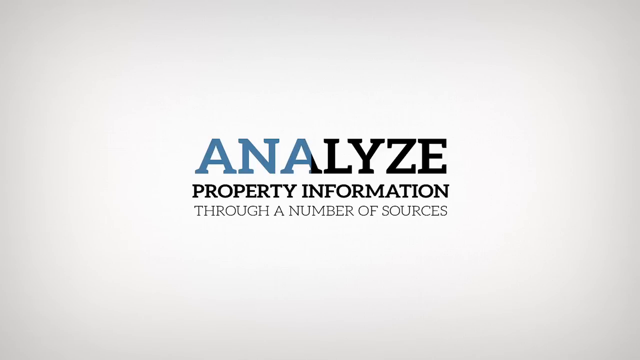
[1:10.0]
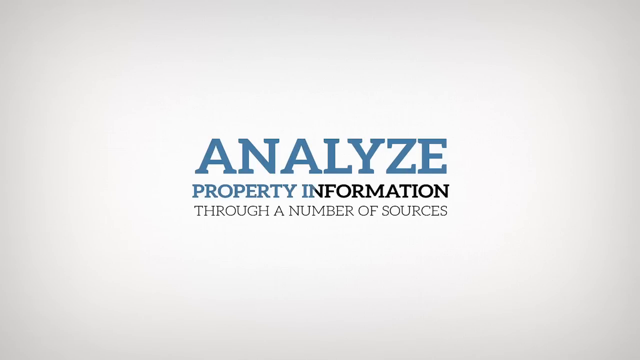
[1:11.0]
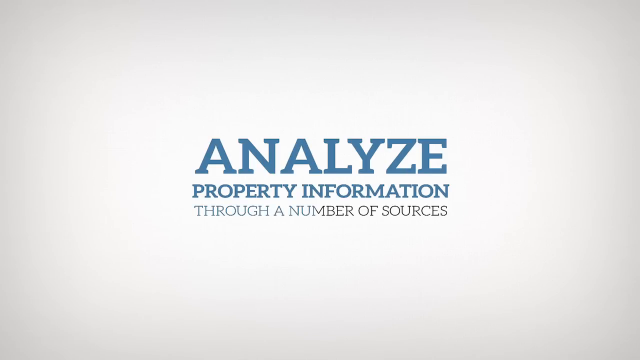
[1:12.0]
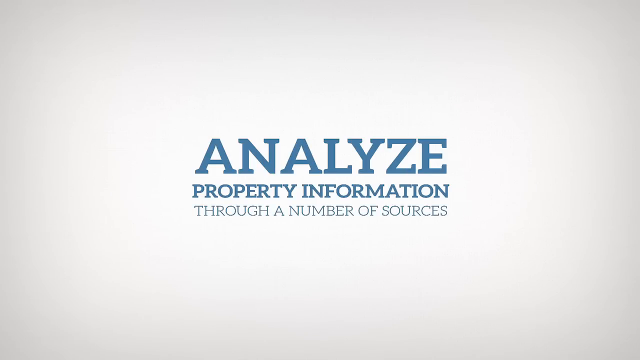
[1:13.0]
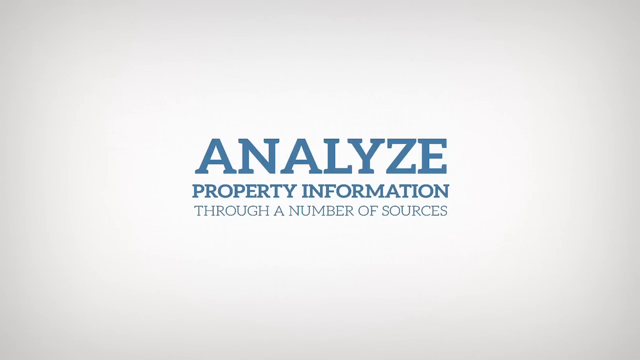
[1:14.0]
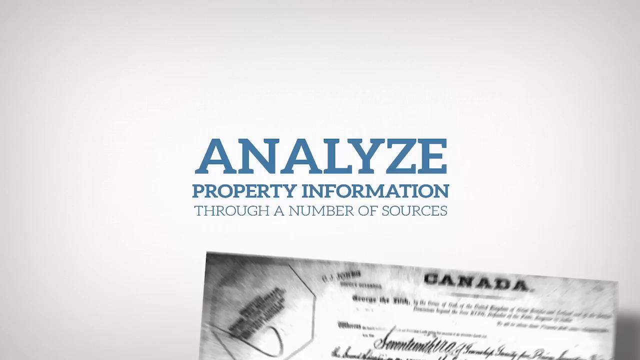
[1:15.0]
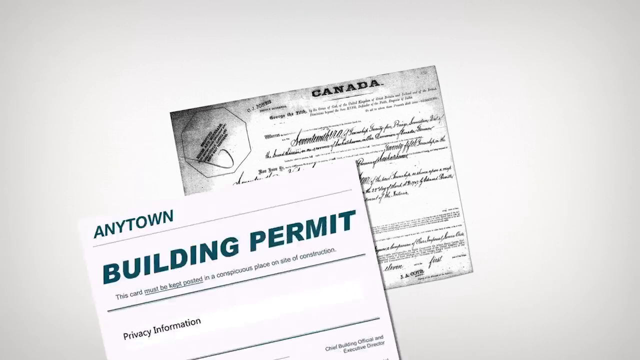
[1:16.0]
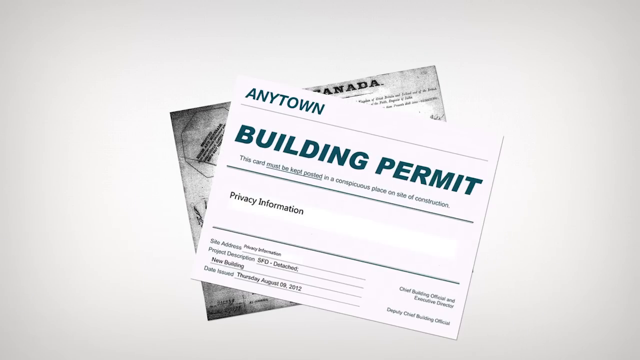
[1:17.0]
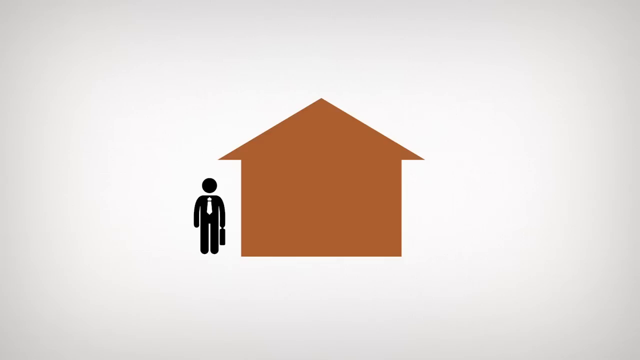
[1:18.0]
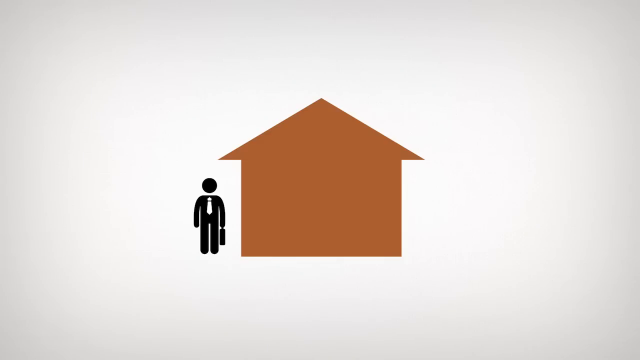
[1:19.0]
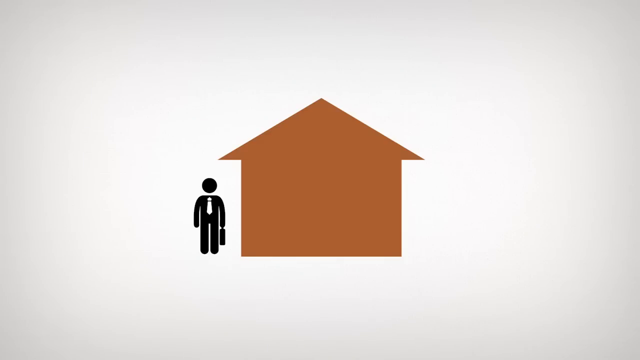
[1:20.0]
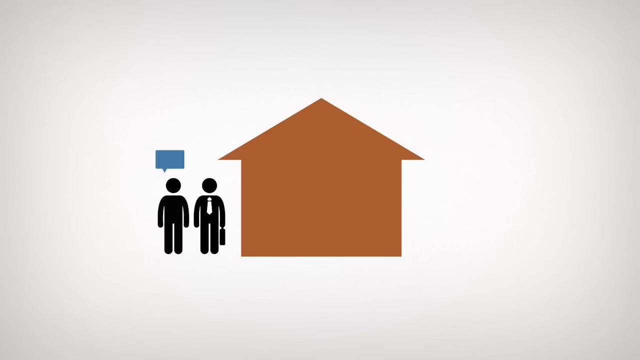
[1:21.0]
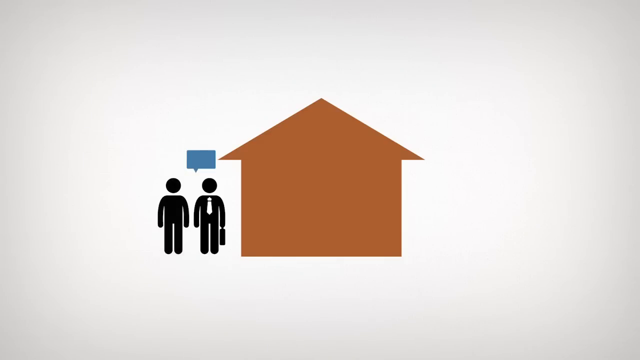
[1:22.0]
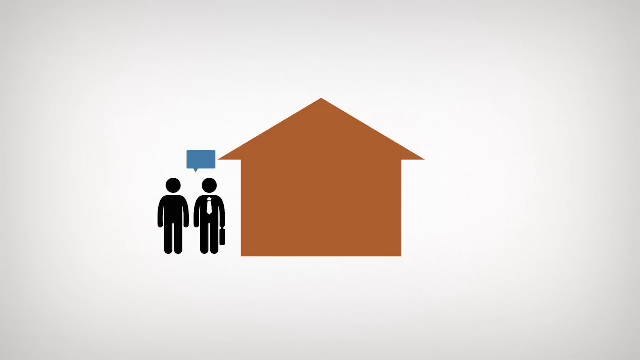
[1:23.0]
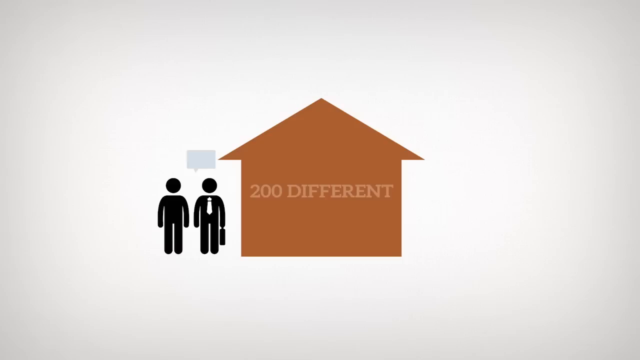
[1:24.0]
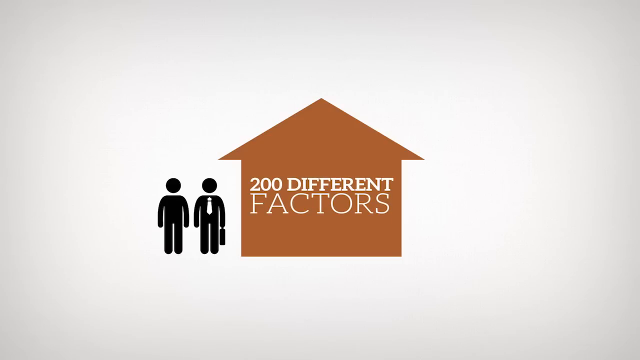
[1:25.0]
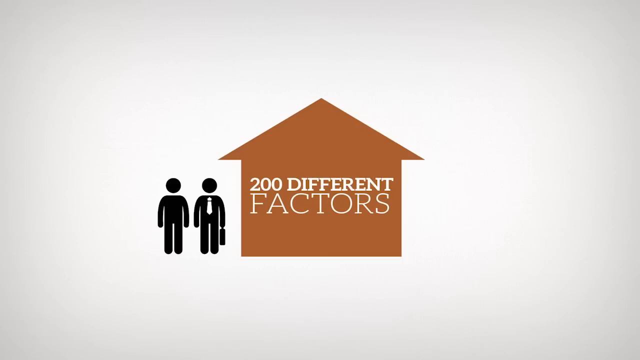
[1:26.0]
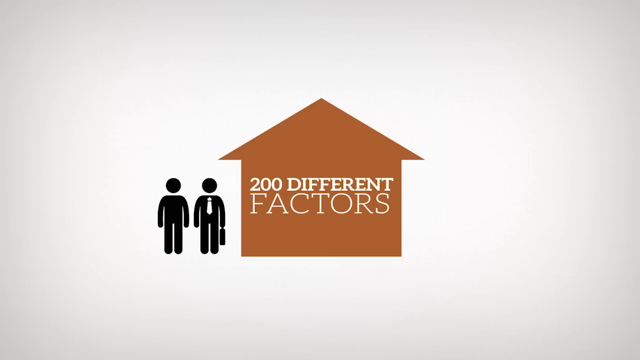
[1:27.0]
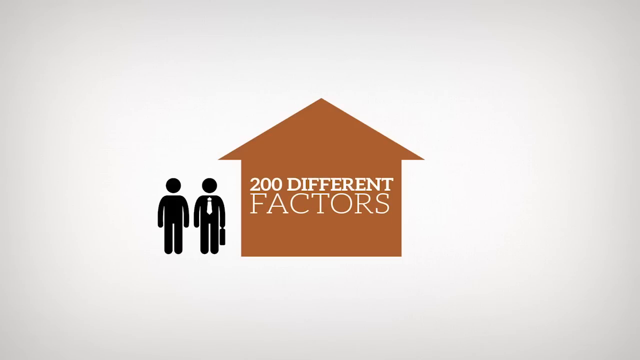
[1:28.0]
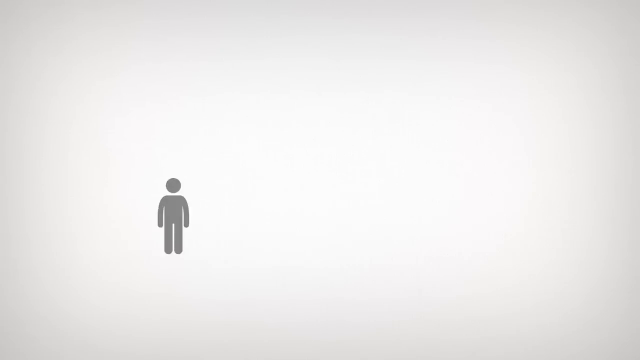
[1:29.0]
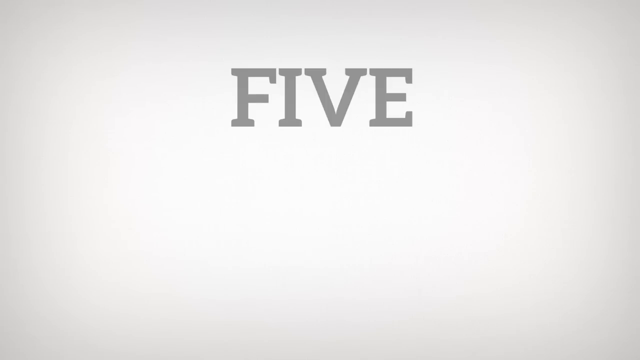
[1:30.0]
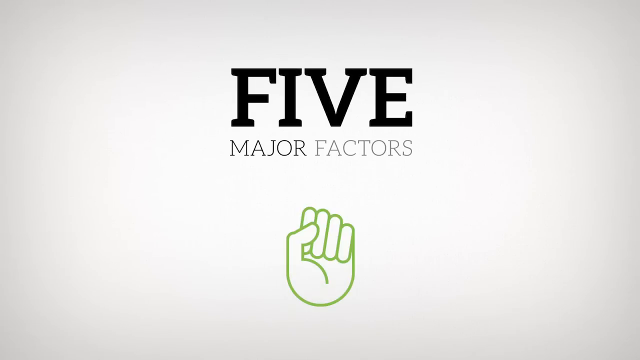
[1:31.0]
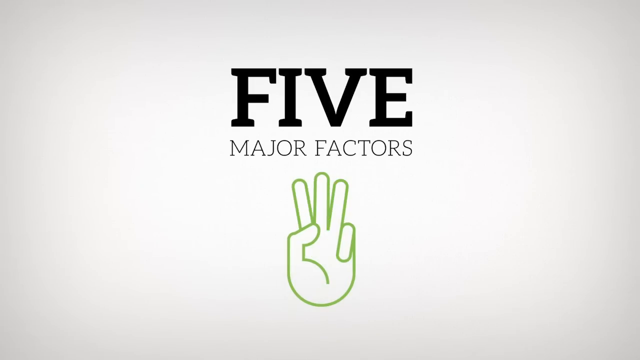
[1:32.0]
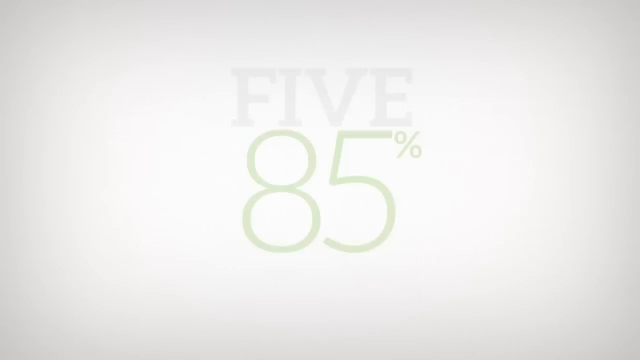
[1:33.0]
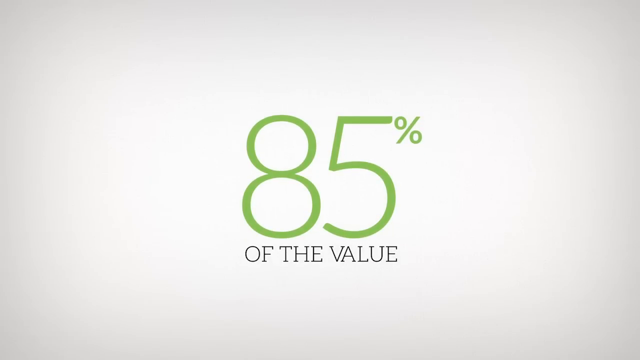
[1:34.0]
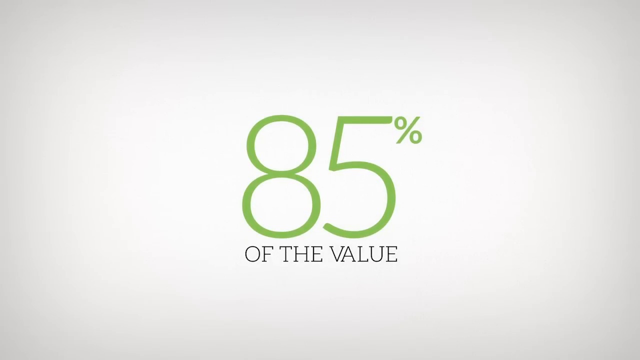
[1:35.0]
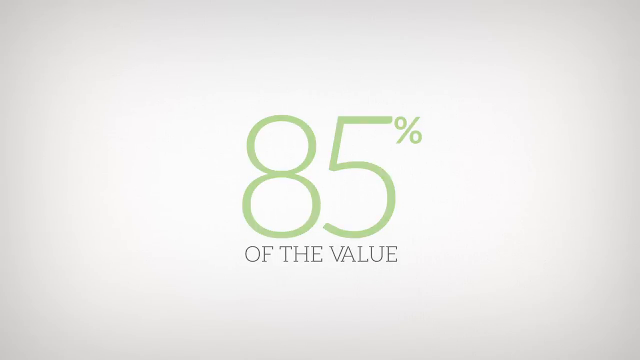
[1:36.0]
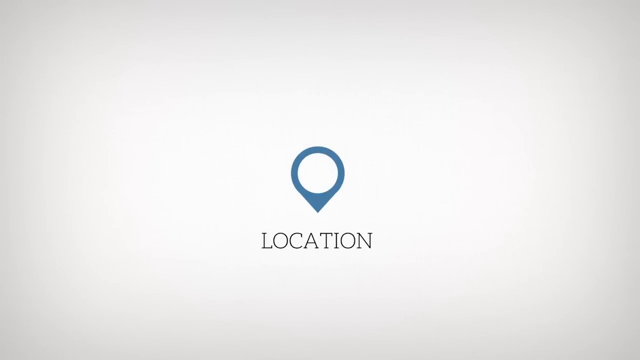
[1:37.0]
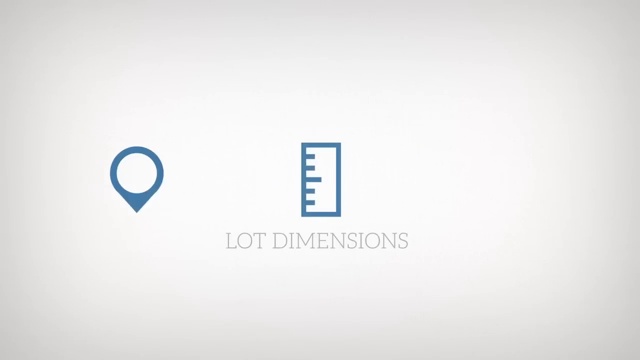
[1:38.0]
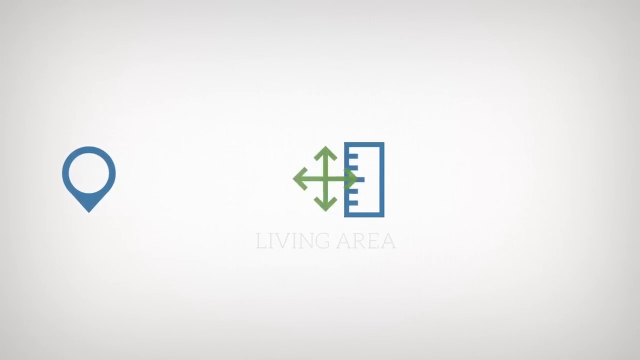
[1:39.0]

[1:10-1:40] All-caps text in the center of the screen reads "analyze property information through a number of sources". Most of the text is black, but part of the word "analyze" is light blue before turning to black. Through an animation, the blue spreads to take over the black text until all of the text is blue.